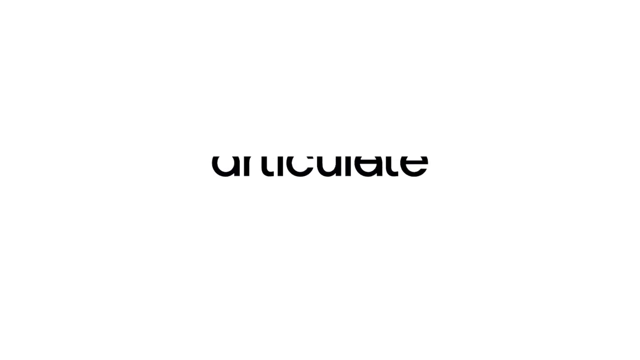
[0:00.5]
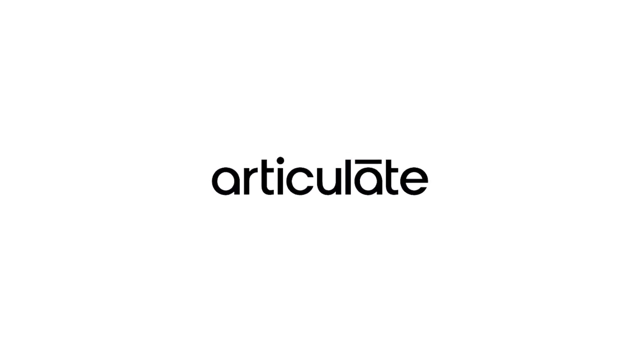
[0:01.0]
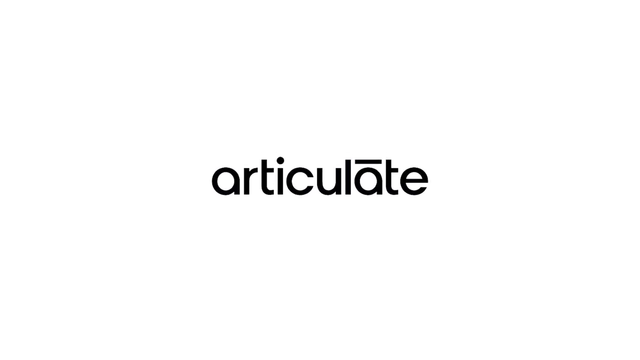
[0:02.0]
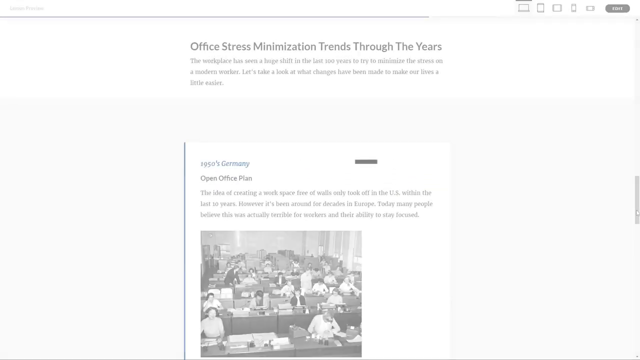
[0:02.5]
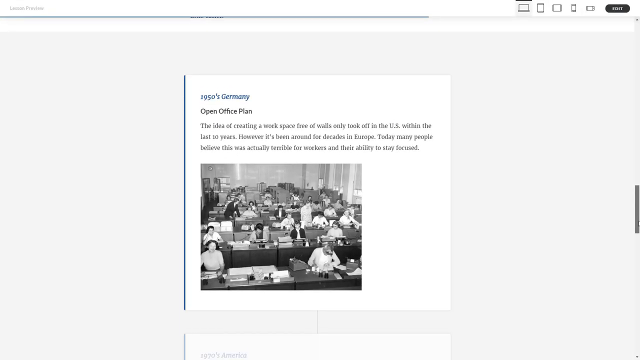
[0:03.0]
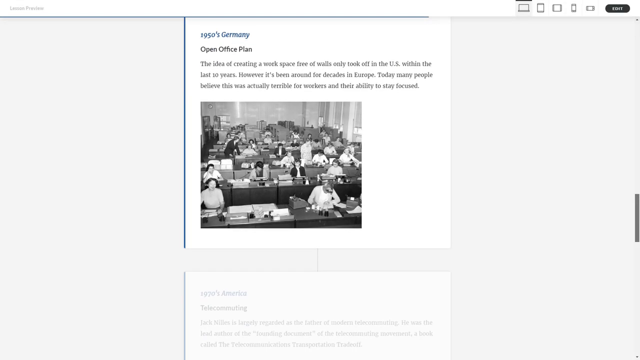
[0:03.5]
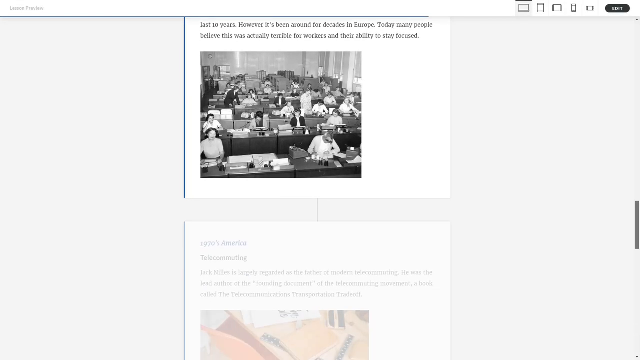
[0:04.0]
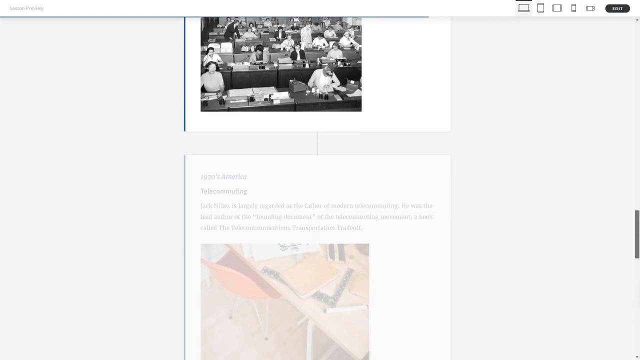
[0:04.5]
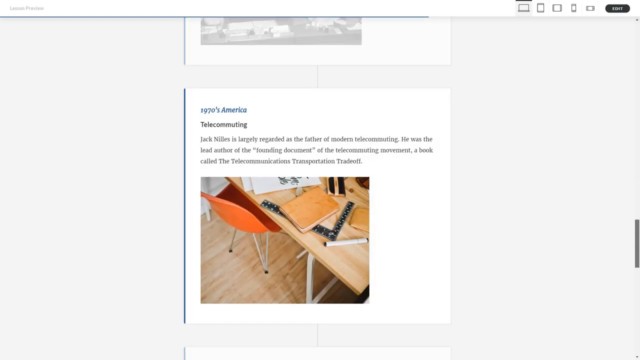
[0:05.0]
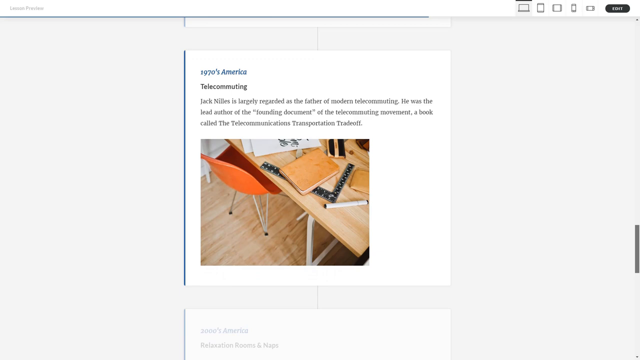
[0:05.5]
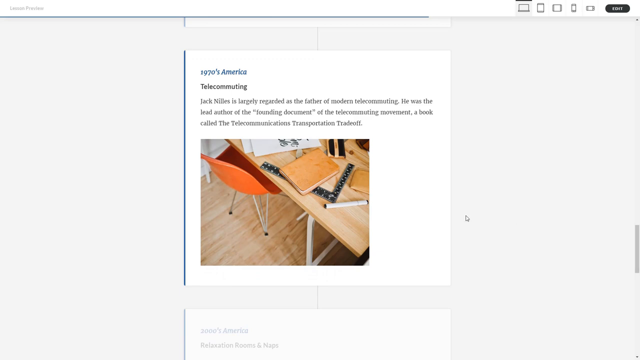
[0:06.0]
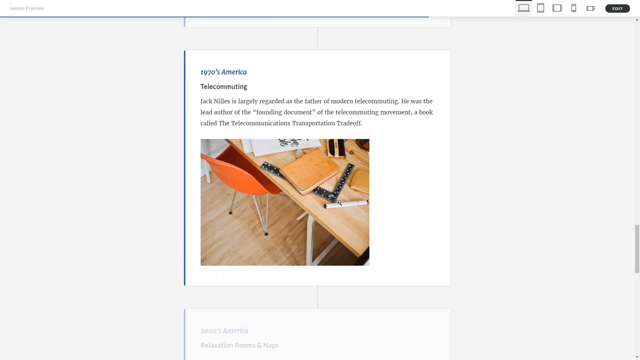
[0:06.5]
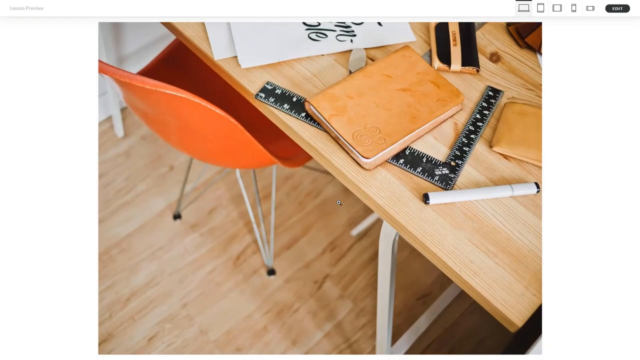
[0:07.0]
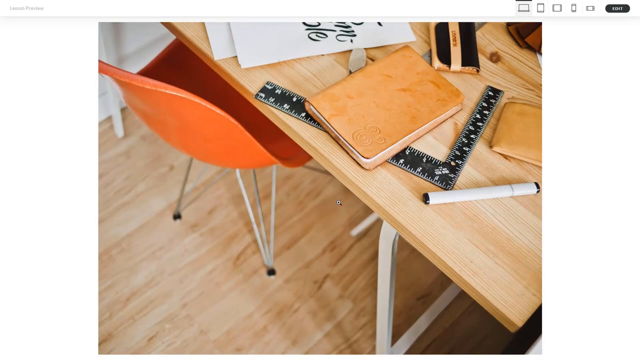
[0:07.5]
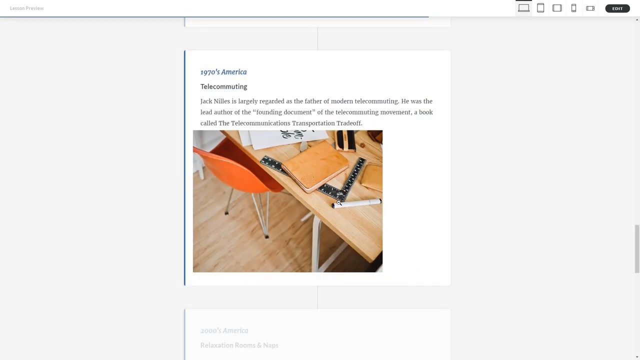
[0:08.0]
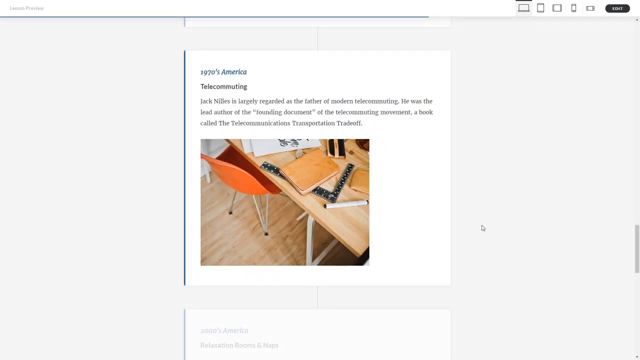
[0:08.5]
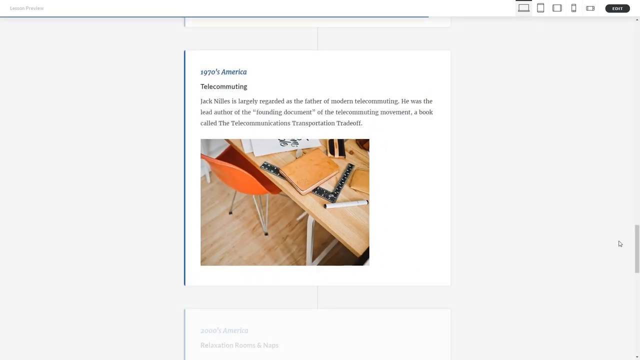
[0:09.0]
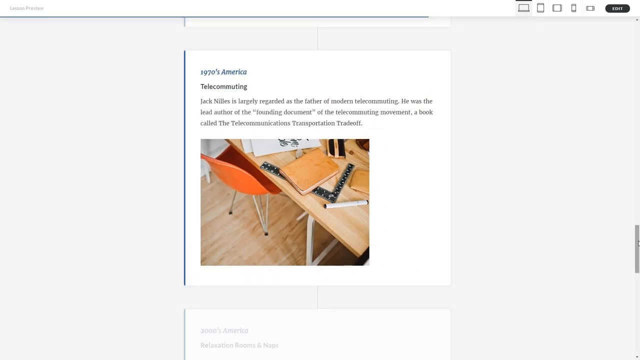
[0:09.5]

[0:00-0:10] The video opens on a white screen, and the word "articulate" appears from the top, sort of in the center of the empty space, sliding or popping down as if from an opening in the air. It then disappears back up, and the view switches to a white background, sort of a web page with a lot of text and black-and-white images mixed in. As the page scrolls down, more text reading "1979 America" appears at the top, followed by a colored image of what looks like an orange chair beside a wood table, along with a ruler, a notebook, a protractor, a marker and some other items. The image is enlarged for a closer look, then zoomed back out. The user moves the mouse to the right to the scroll bar and continues scrolling downward.